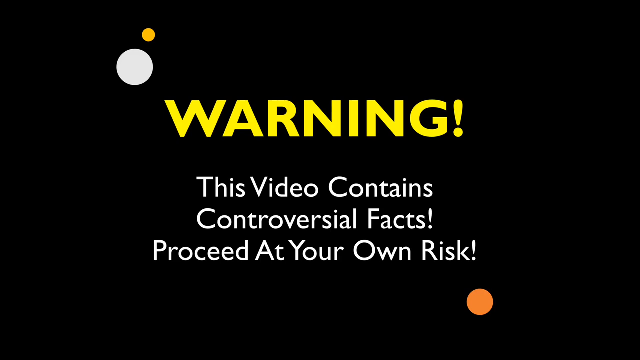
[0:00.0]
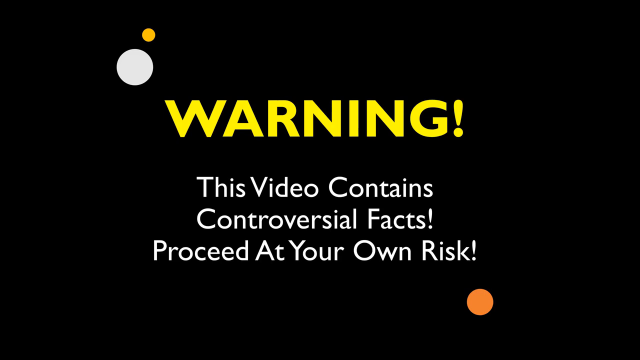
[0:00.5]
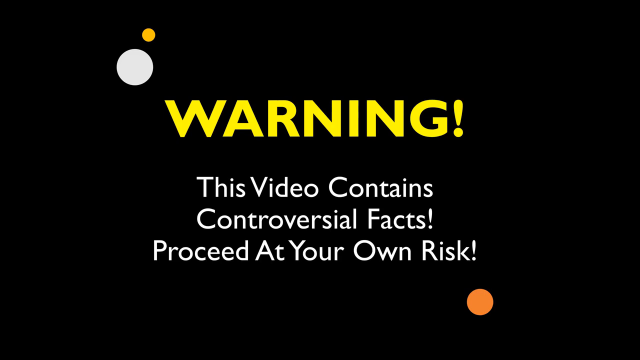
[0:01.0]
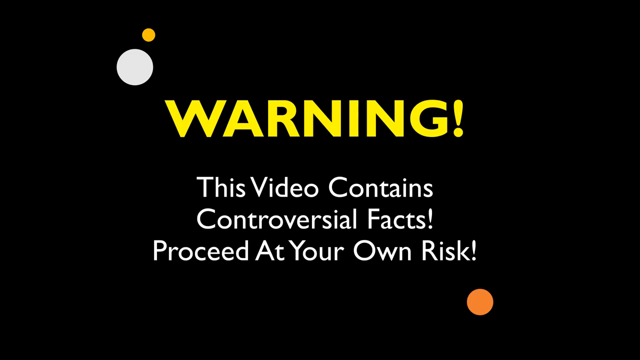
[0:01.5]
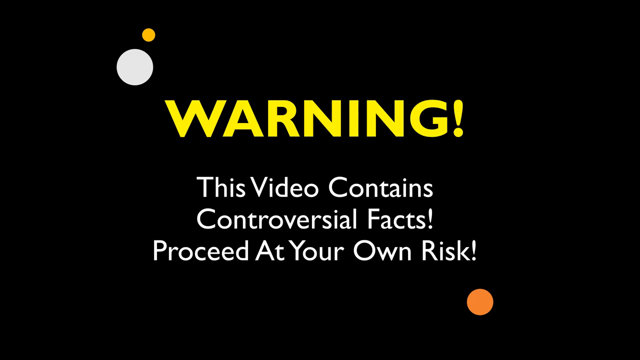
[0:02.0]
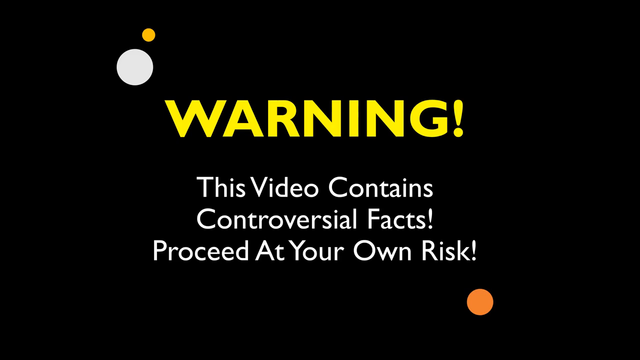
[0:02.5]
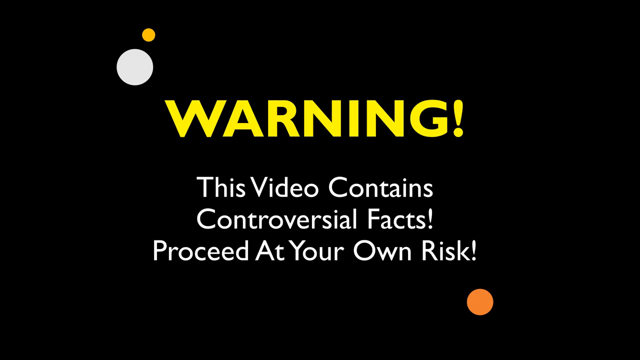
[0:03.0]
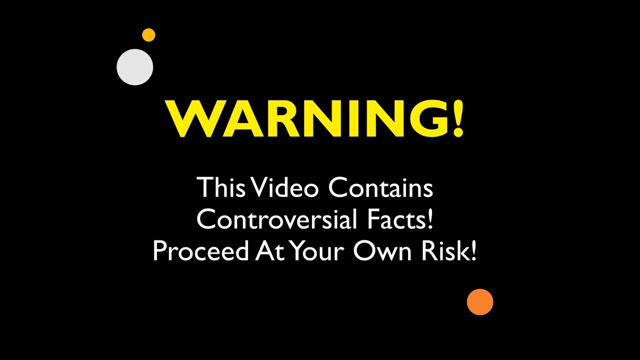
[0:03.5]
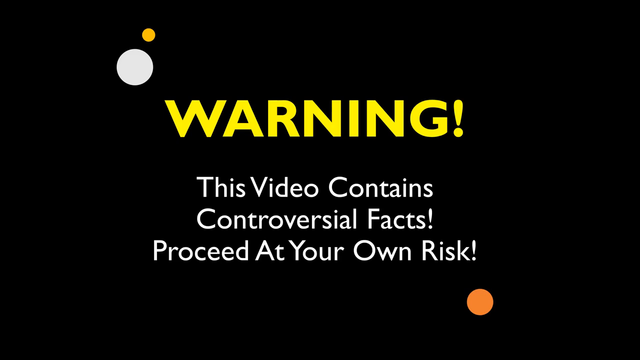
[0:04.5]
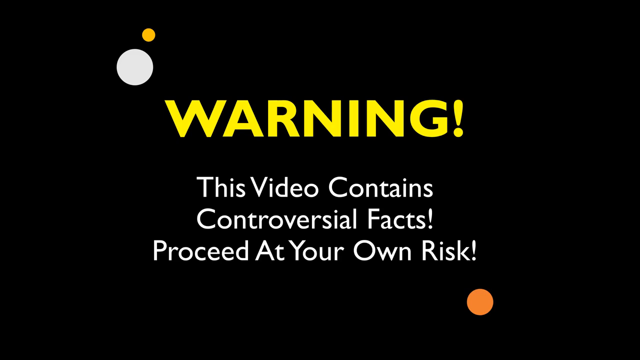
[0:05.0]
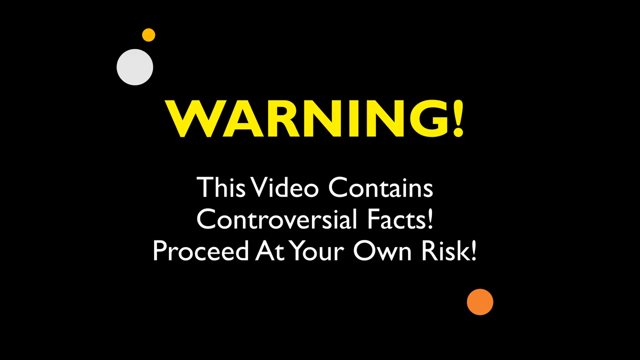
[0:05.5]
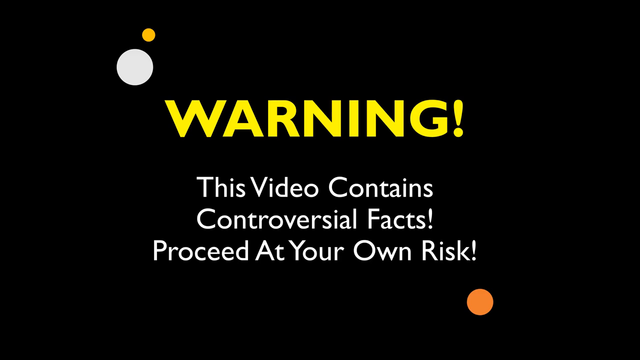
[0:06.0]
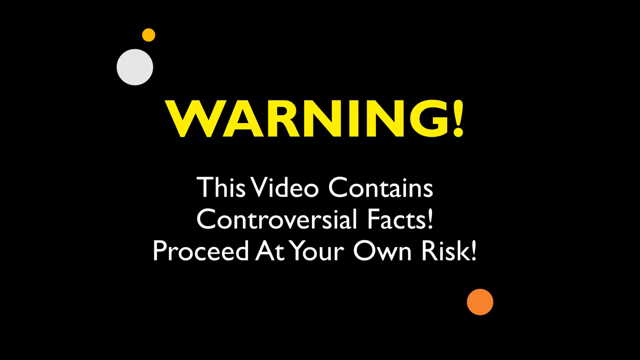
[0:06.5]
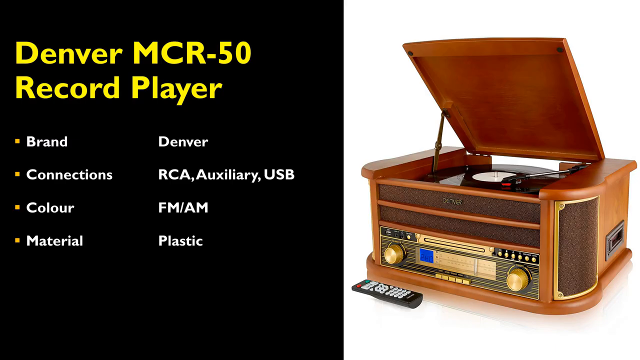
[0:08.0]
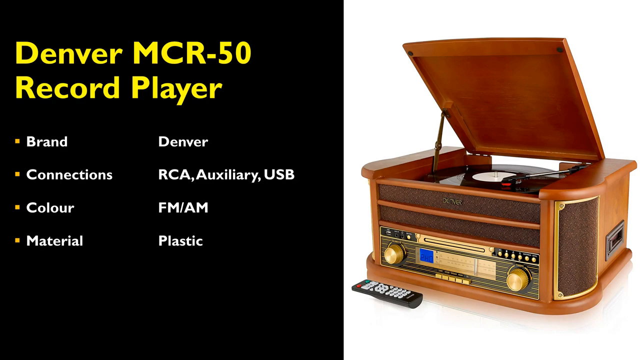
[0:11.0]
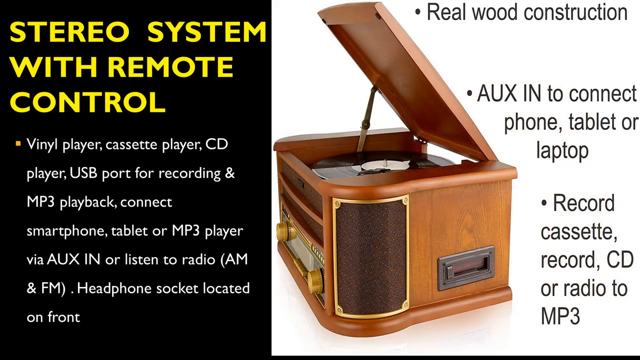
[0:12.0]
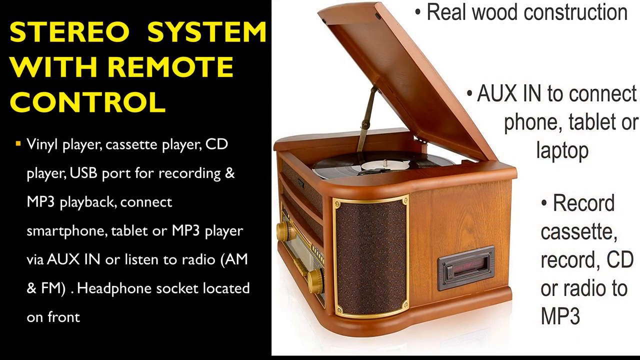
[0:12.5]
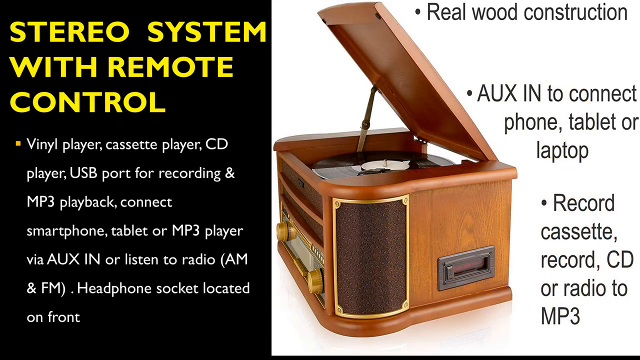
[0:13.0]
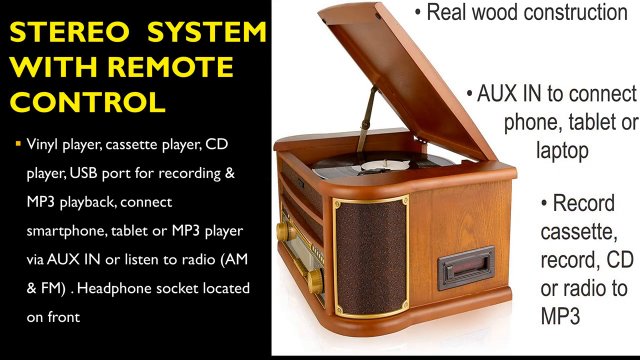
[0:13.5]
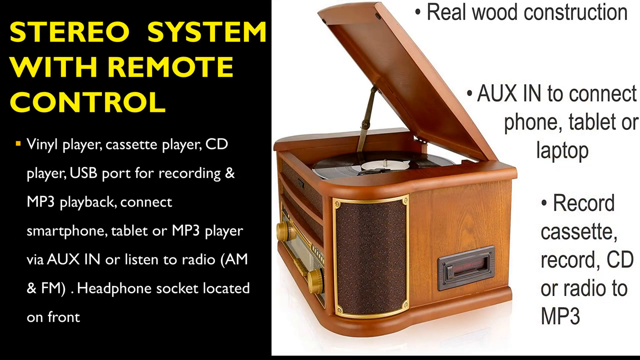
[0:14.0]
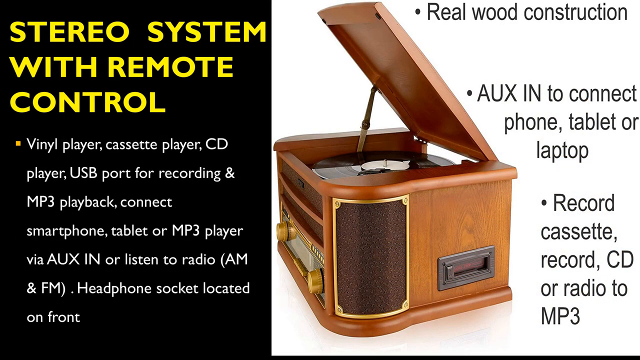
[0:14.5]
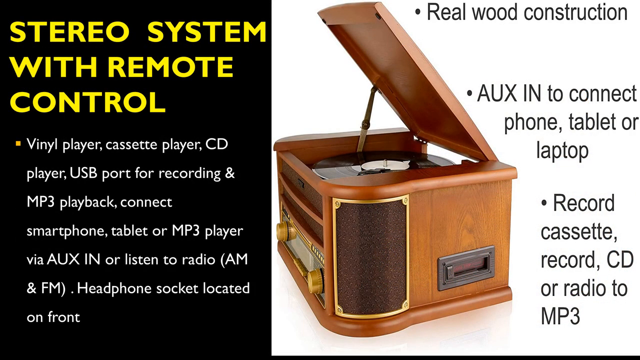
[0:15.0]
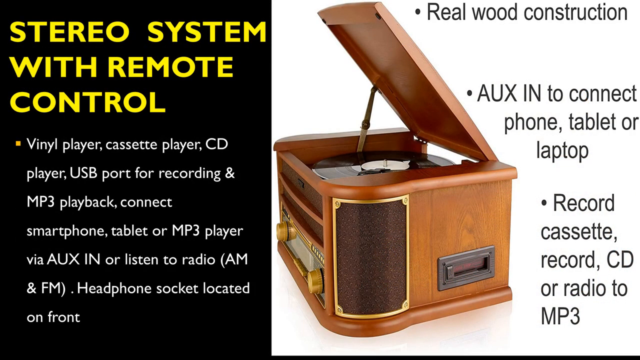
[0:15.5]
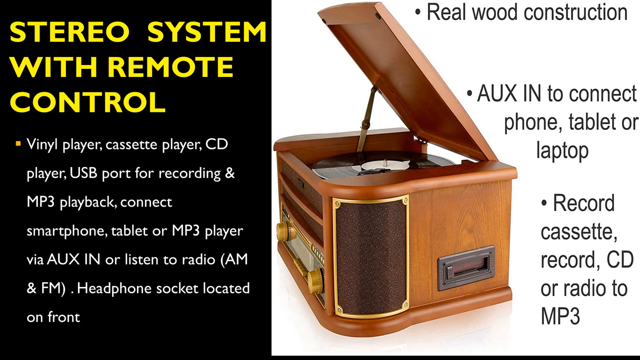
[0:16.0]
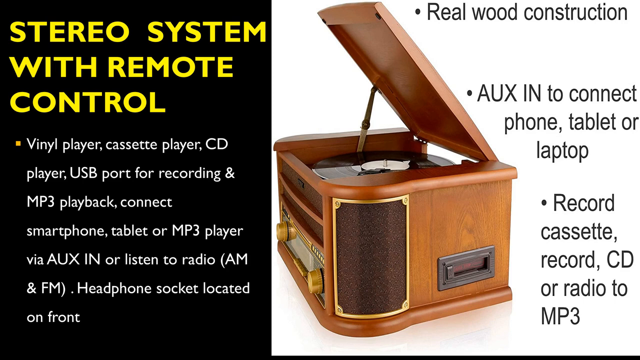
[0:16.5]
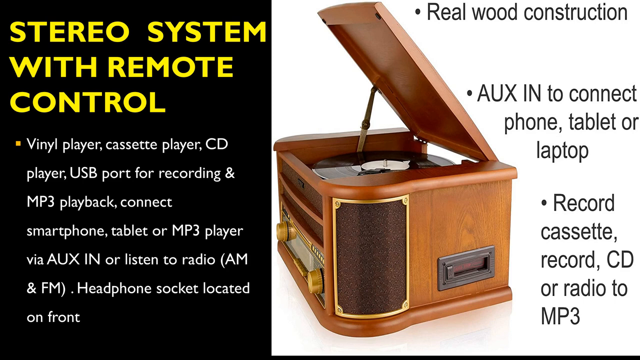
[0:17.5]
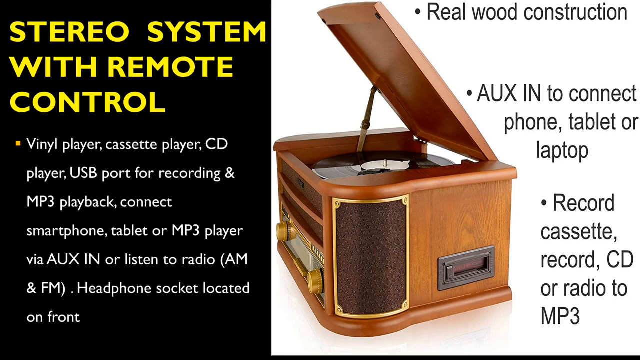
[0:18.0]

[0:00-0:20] The video opens on a black background with "WARNING" in yellow capital letters followed by an exclamation point. Below it, after some space, smaller, less bold white text that is not in all caps reads "this video contains controversial facts" and continues on to "at your own risk", with an exclamation point after "facts" and after "risk". This stays on screen for a few seconds. The next page is split roughly in half. On the left side, with a black and yellow background, the text reads "DENVER MCR-50 RECORD PLAYER", and beneath it are yellow bullet points with white text listing "BRAND CONNECTIONS, COLOR, MATERIAL, DENVER, RCA", along with USB, FM, AM and plastics. The page then changes to one with yellow text reading "stereo system with remote control" and white text listing a cassette player, a CD player, a USB port for recording and MP3 playback, connecting a smartphone, tablet or MP3 player via Aux-in, listening to AM and FM radio, and a headphone socket. A side profile view of the product appears, with text saying it is made from real wood construction.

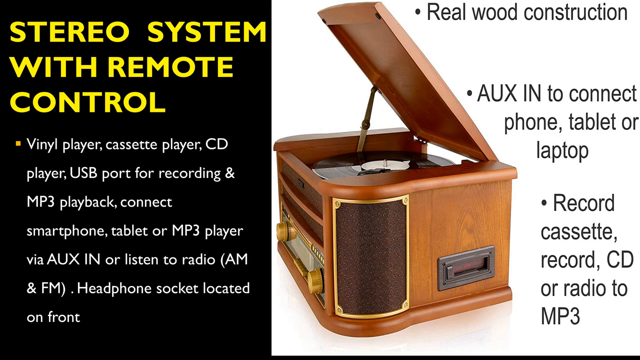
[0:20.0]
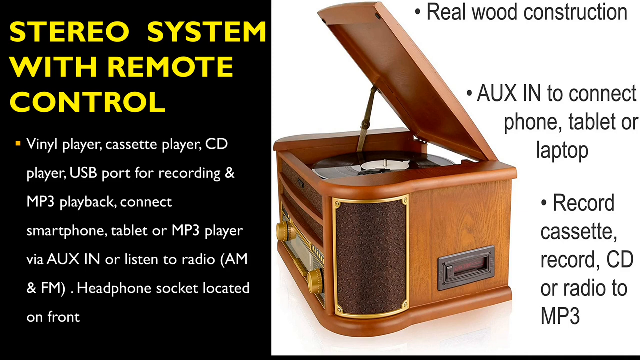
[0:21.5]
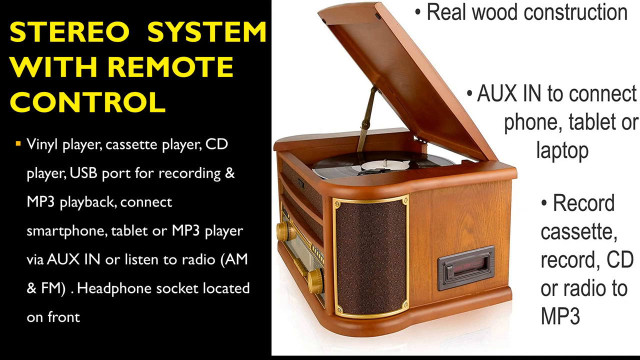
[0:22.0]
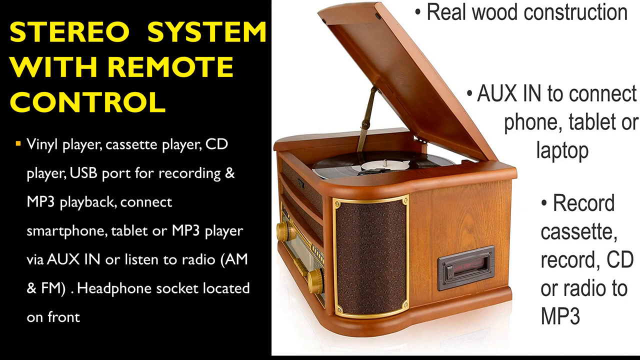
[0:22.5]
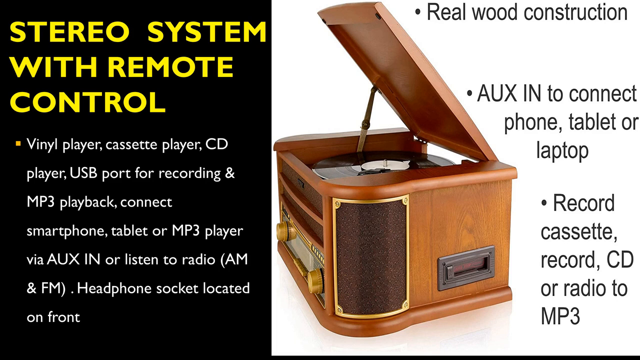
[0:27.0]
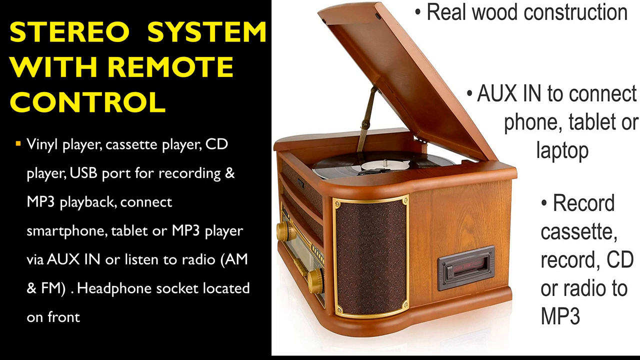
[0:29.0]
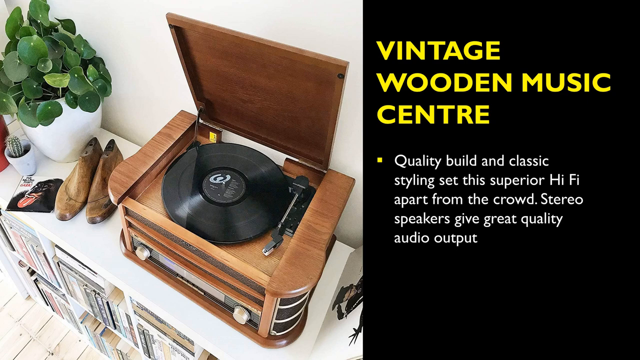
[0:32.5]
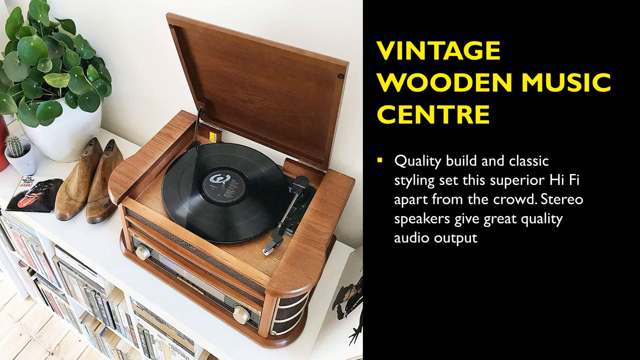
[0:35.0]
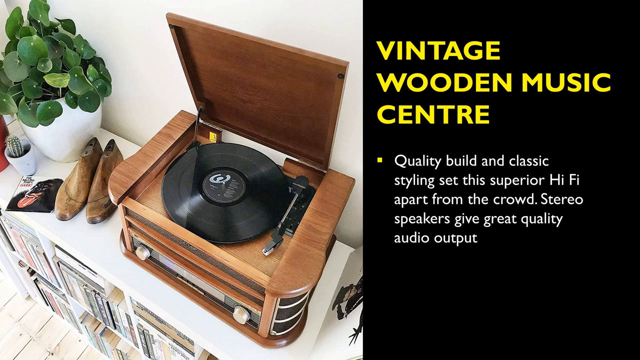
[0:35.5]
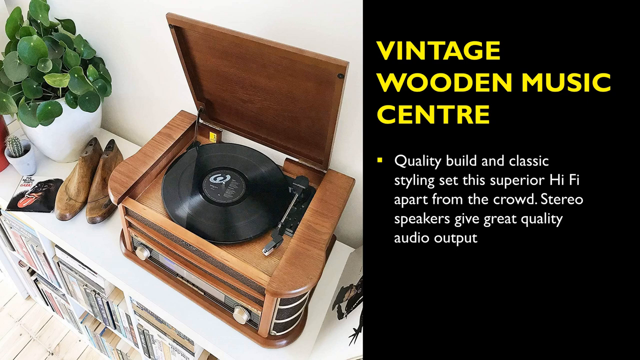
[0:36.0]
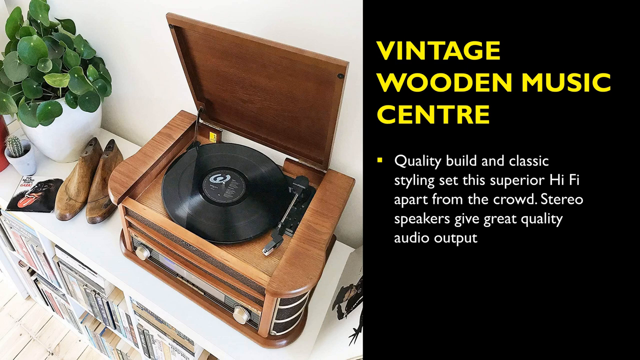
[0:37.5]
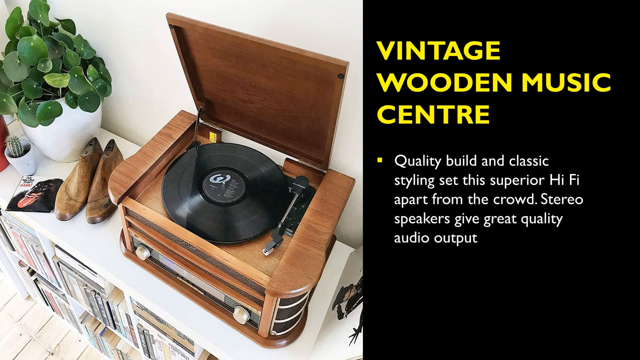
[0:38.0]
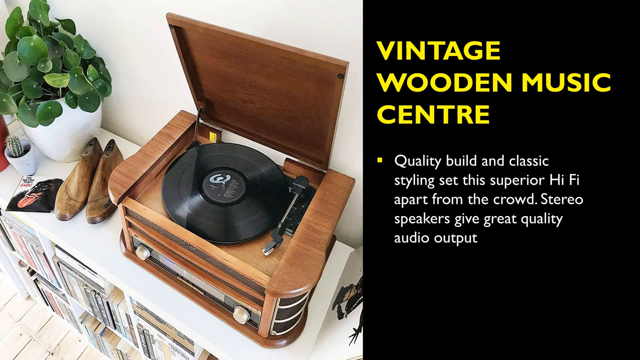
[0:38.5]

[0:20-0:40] On the left side, yellow text reads "stereo system with remote control", and white text below lists a cassette player, a CD player, a USB port for recording and MP3 playback, connecting a smartphone, tablet or MP3 player via aux, listening to AM and FM radio, and a headphone socket. On the right side is a side profile image of the product with the text "real wood construction", along with text about connecting a phone, tablet or laptop. The page, which resembles a PowerPoint slide, stays on screen for a while. The next page shows yellow text on the right side reading "Vintage Music Center", and on the left side an aerial view of the product, looking down on it.